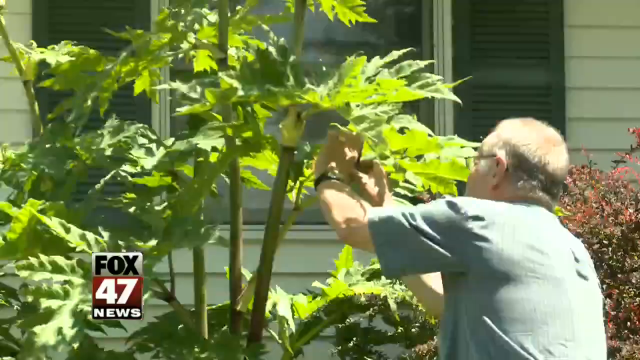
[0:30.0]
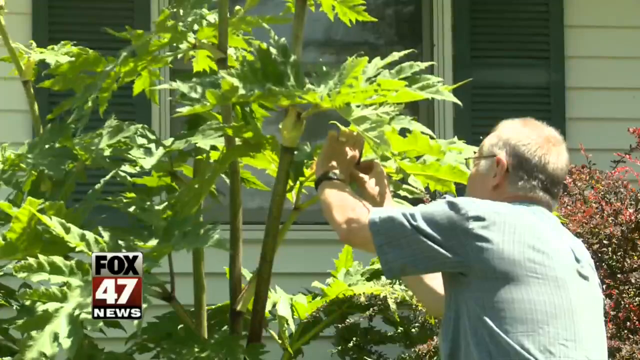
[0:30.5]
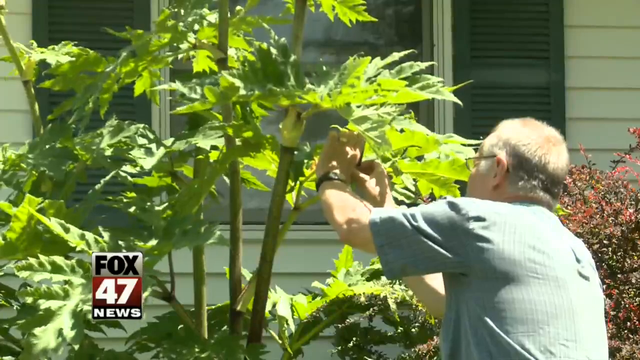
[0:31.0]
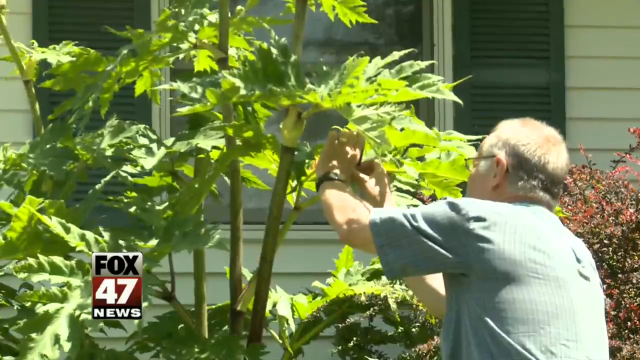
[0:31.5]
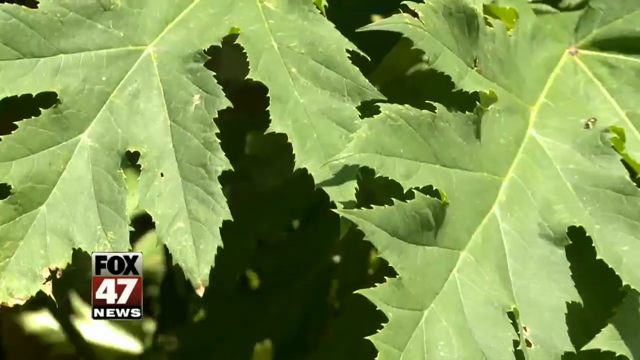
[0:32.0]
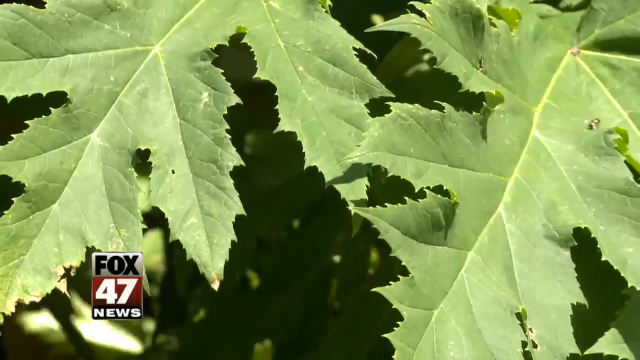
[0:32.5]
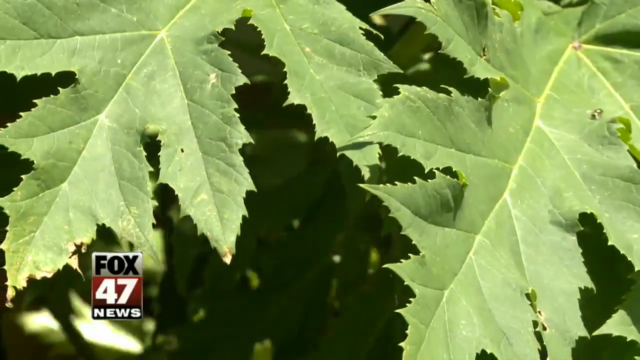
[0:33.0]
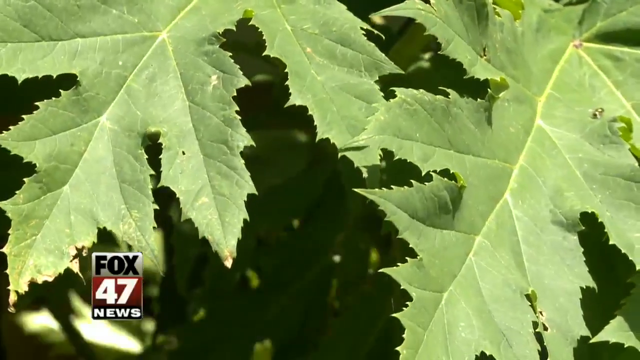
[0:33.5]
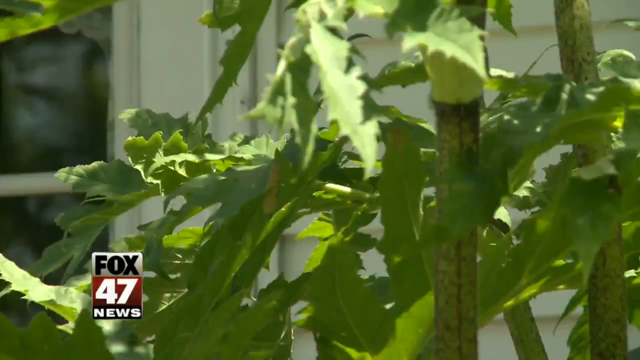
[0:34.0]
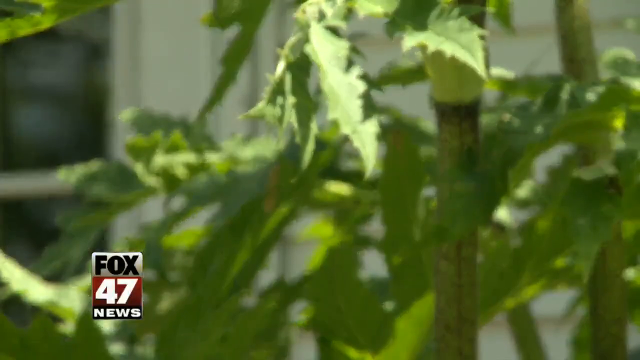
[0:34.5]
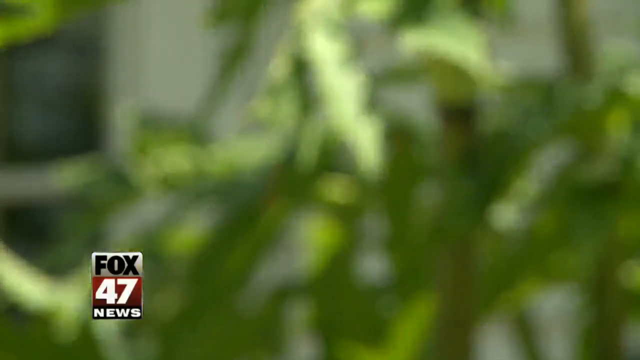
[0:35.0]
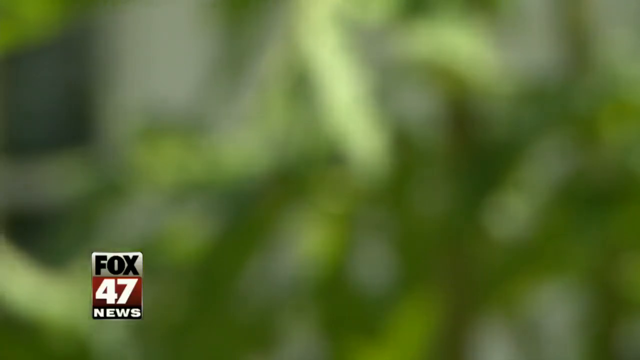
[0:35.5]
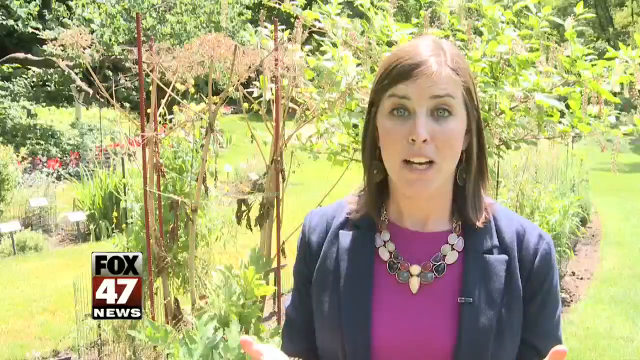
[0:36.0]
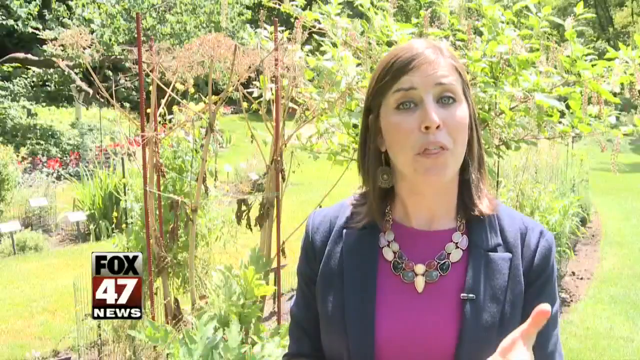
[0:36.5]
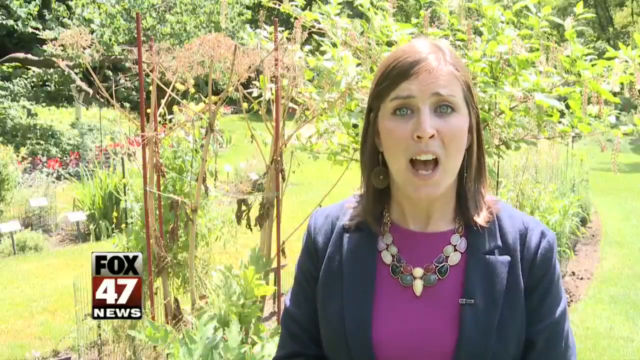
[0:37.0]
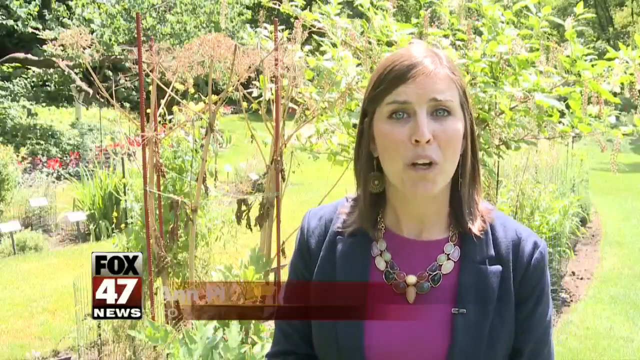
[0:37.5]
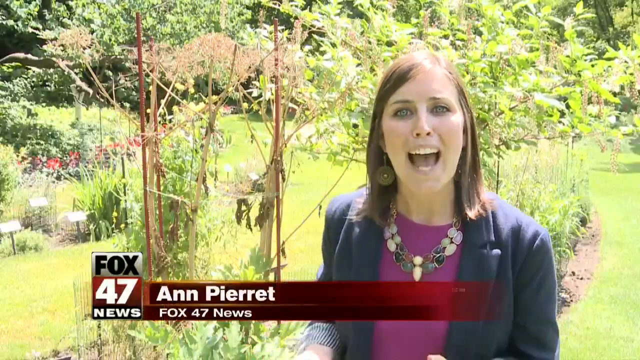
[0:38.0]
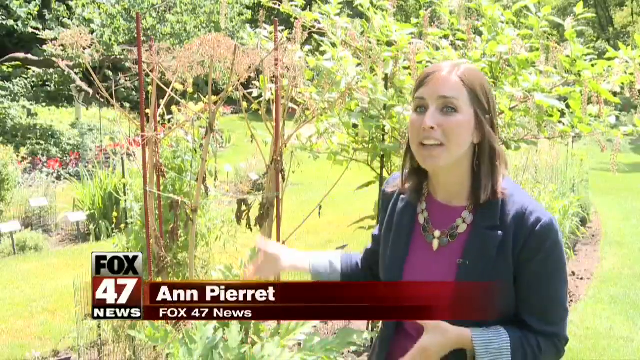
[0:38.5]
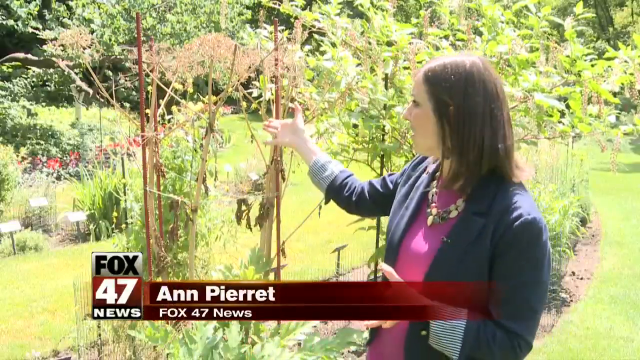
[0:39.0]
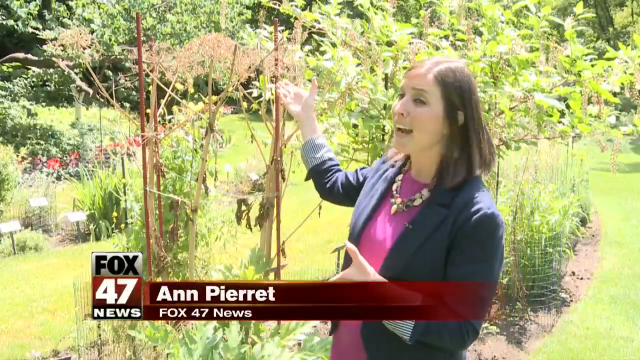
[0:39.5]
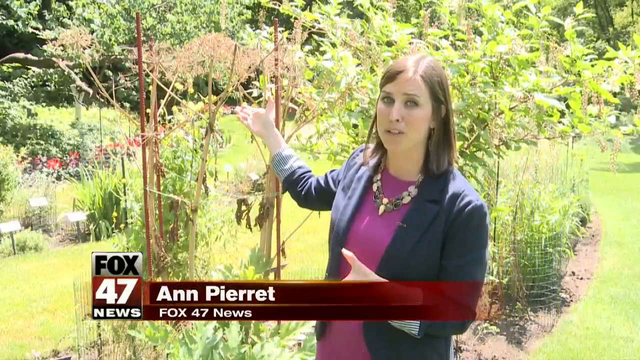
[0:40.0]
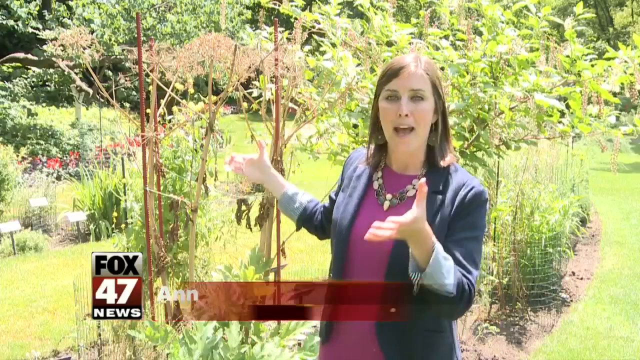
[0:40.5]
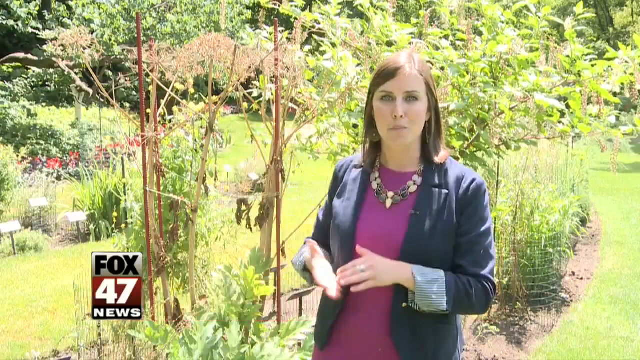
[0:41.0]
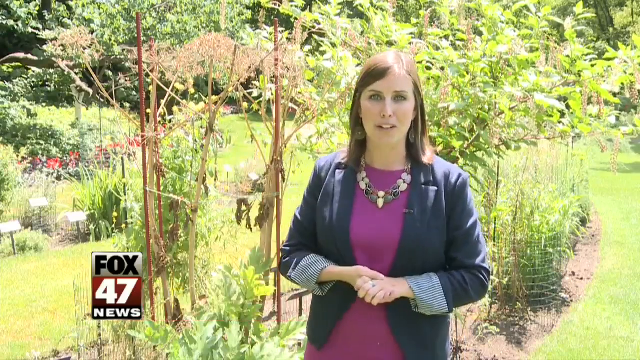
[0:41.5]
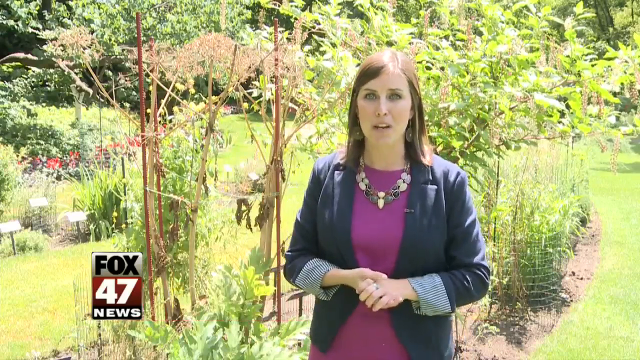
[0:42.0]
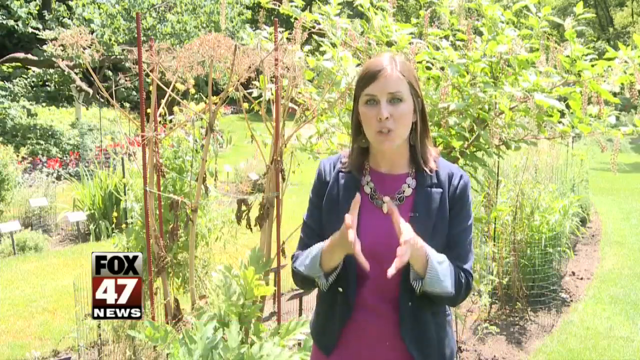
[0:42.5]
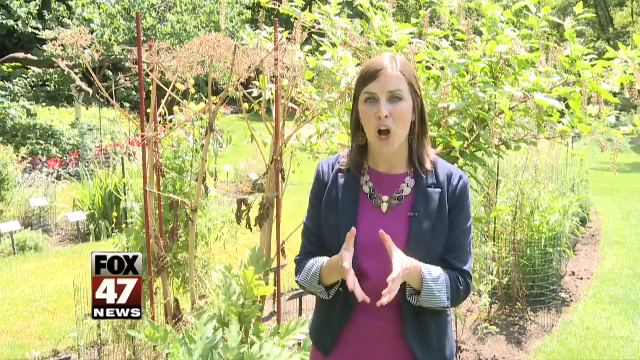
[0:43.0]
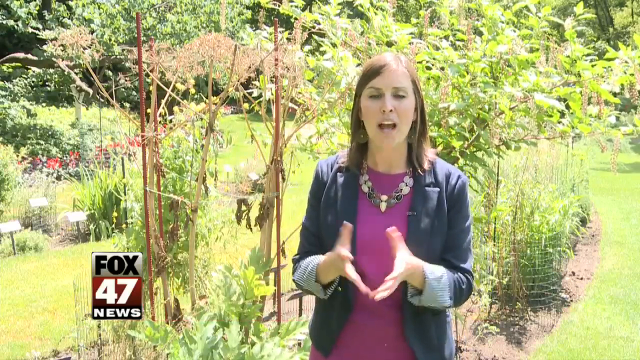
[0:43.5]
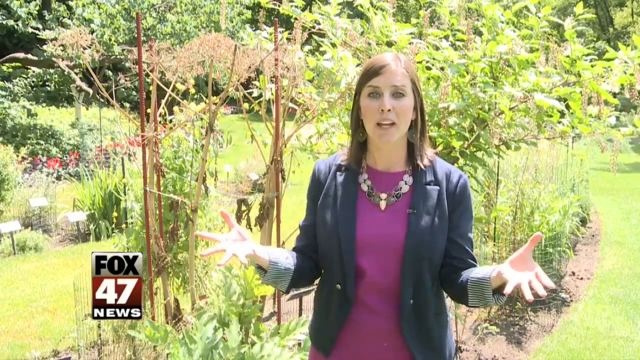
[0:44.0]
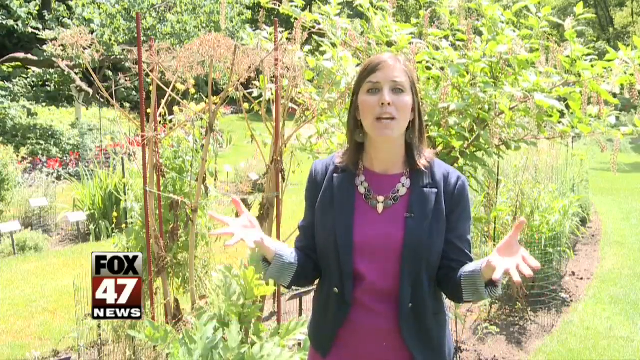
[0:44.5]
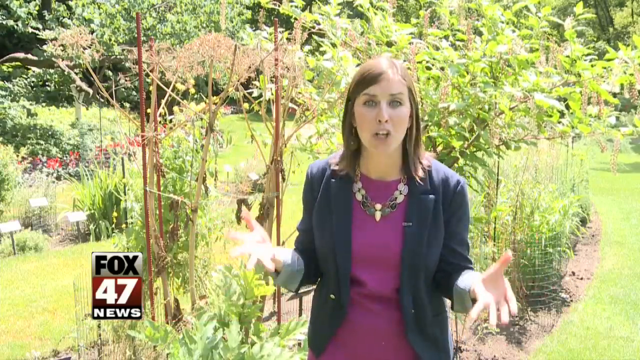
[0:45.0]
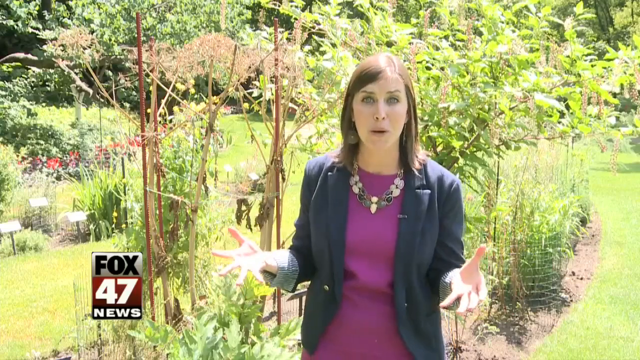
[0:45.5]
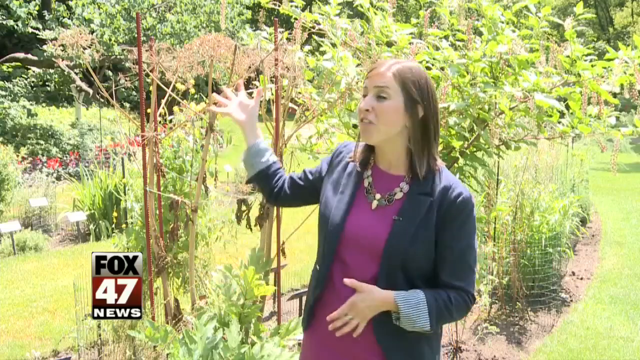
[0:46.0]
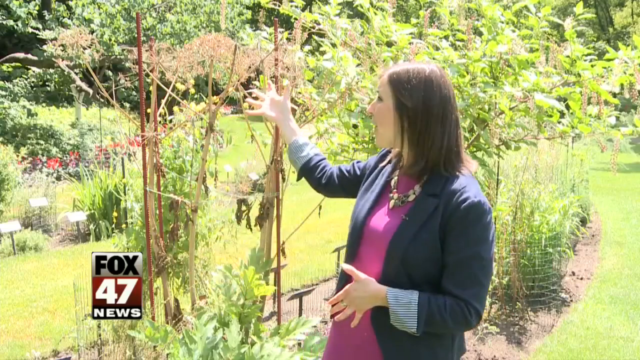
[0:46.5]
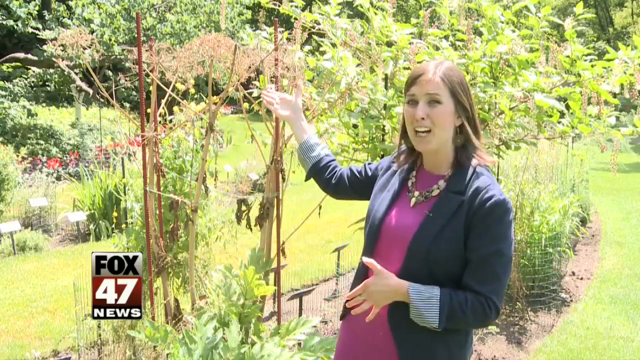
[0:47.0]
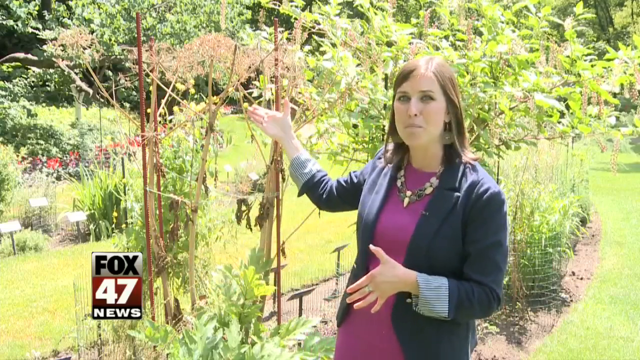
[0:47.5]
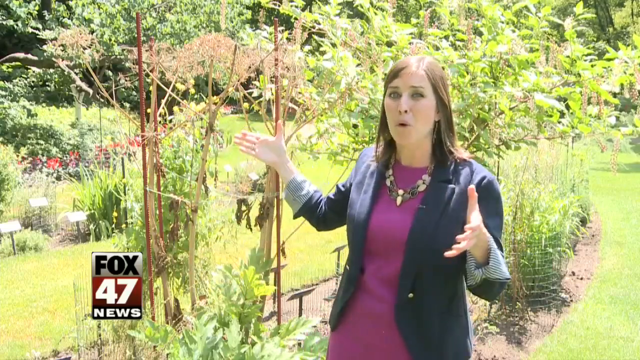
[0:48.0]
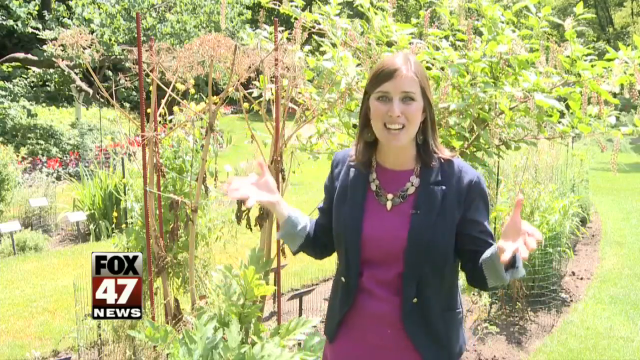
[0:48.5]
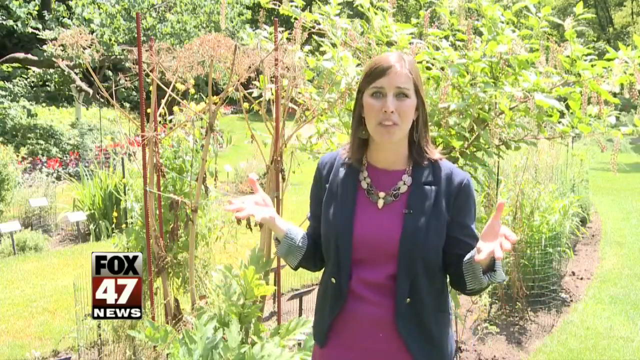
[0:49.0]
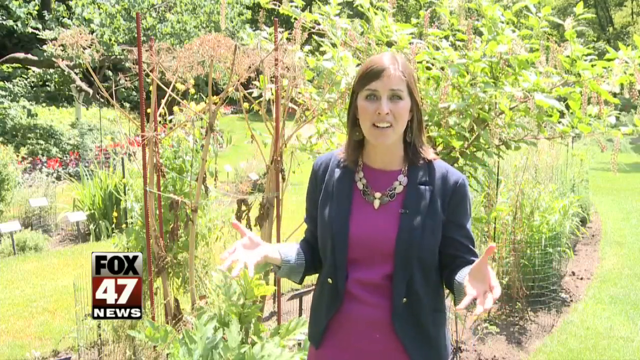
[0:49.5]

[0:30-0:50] A man with glasses in a gray t-shirt tends to a plant that looks like hogweed, doing something with it. The plant is then shown from various angles. The picture fades to a white woman in a blue coat, purple top and gold necklace, standing with many trees behind her. She is Ann Pierret from Fox 47 News. She points towards the trees with her left hand and points towards the camera, gesturing expressively with her hands while speaking. Giant hogweeds are behind her, and she points at them and speaks about them. Many different species of plants, many colorful flowers and lots of greenery are behind her. The Fox 47 News logo is on the left-hand side of the screen.